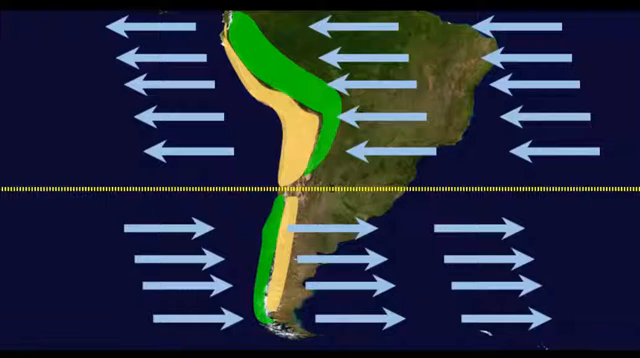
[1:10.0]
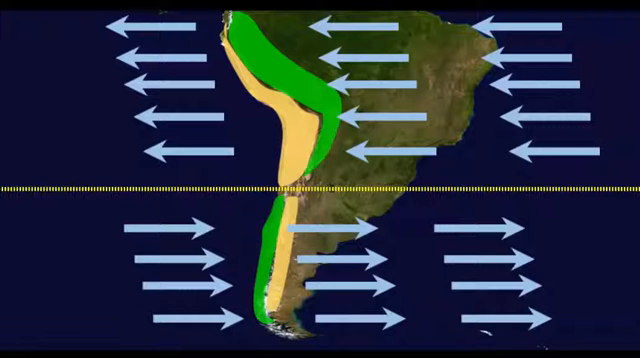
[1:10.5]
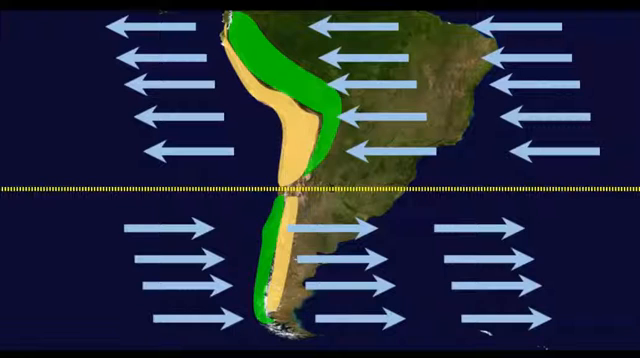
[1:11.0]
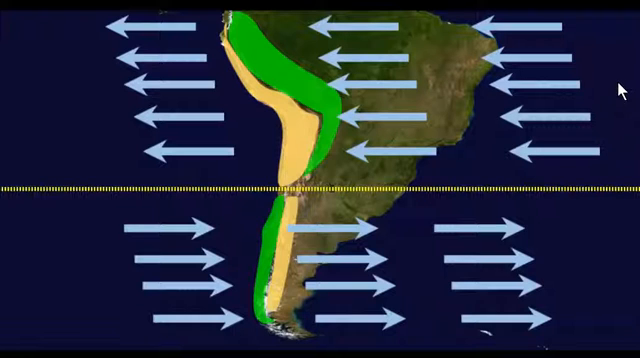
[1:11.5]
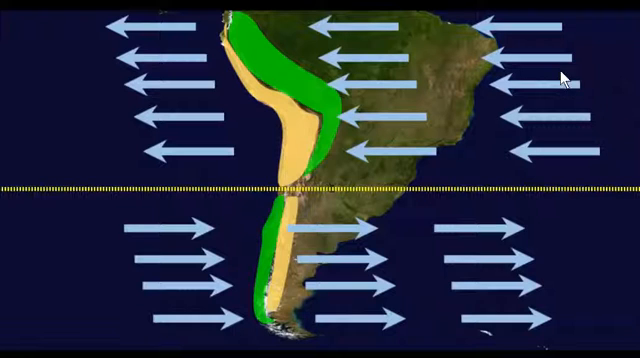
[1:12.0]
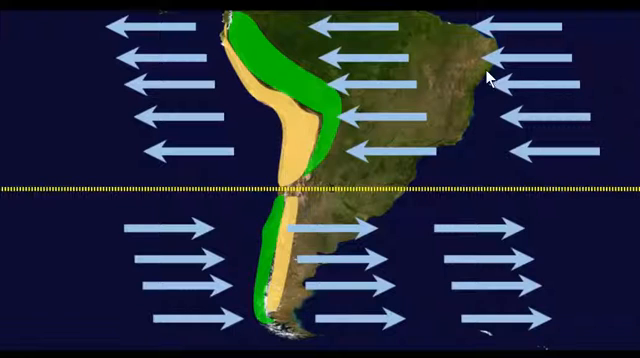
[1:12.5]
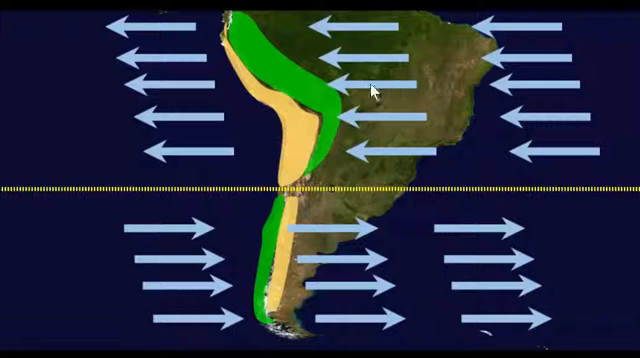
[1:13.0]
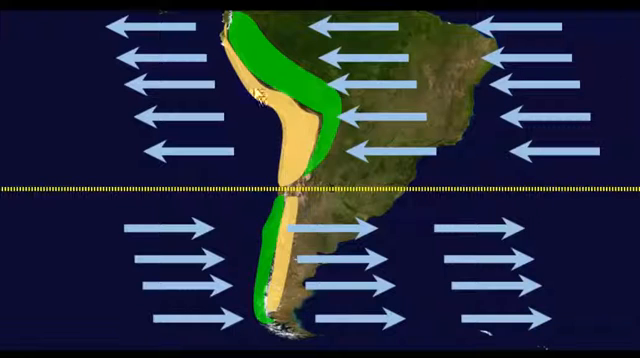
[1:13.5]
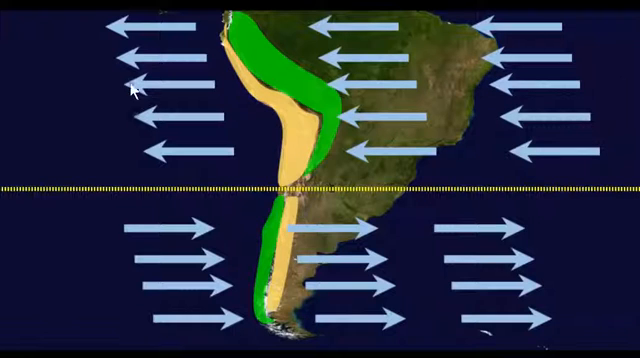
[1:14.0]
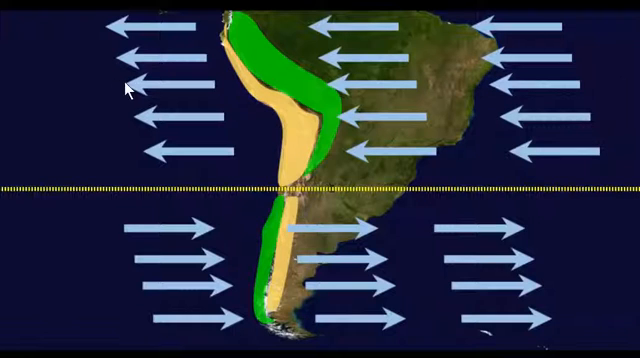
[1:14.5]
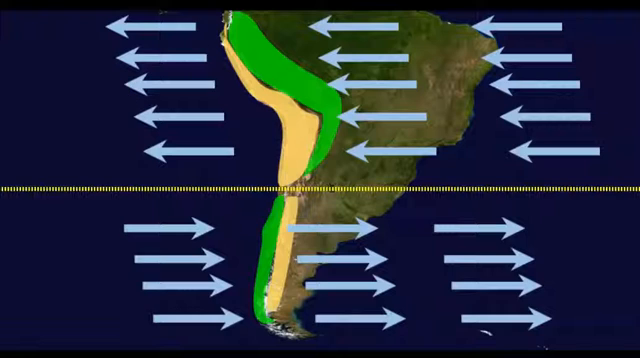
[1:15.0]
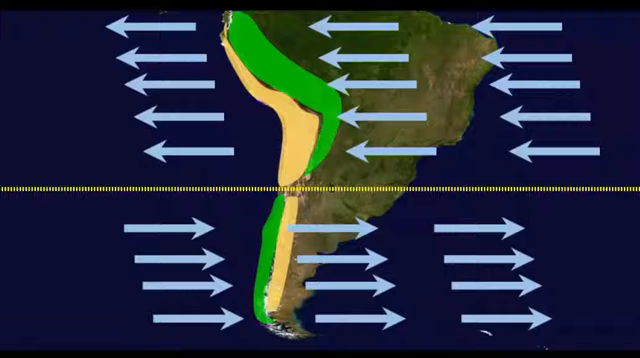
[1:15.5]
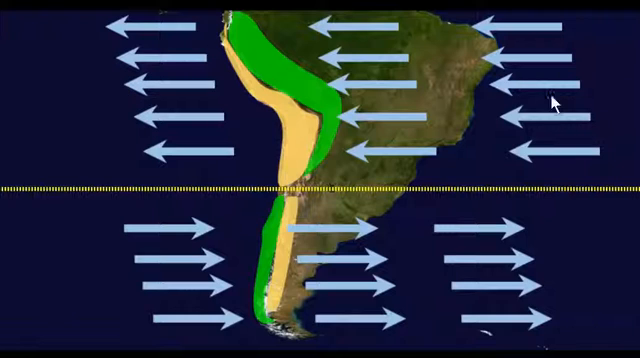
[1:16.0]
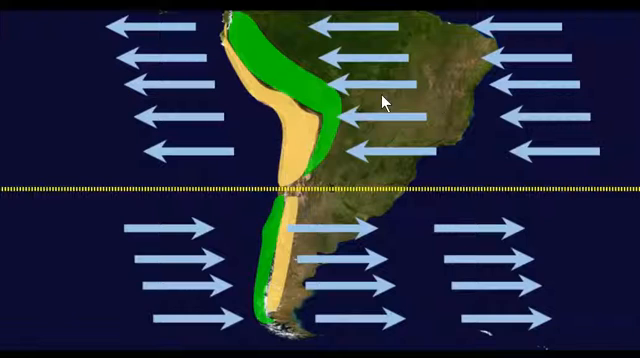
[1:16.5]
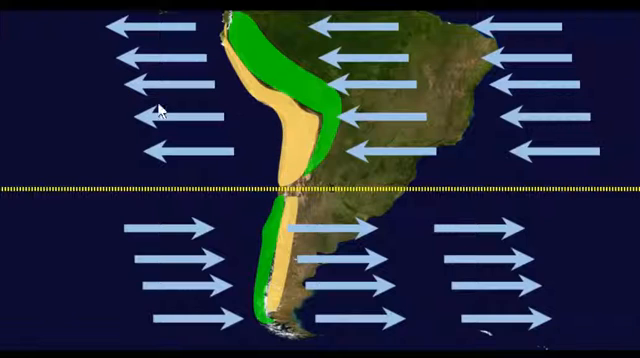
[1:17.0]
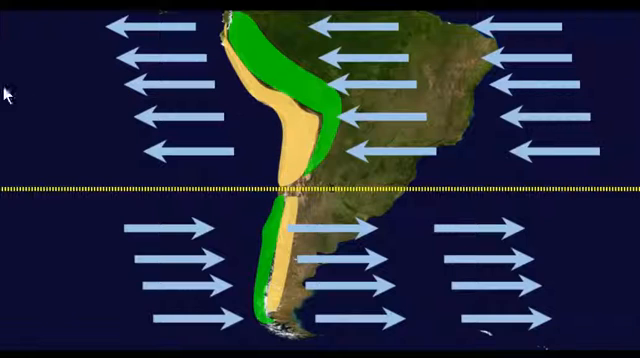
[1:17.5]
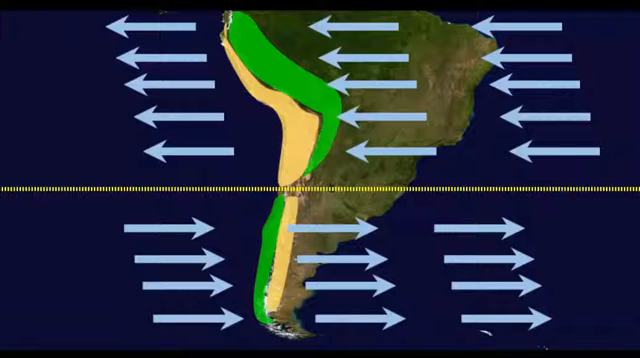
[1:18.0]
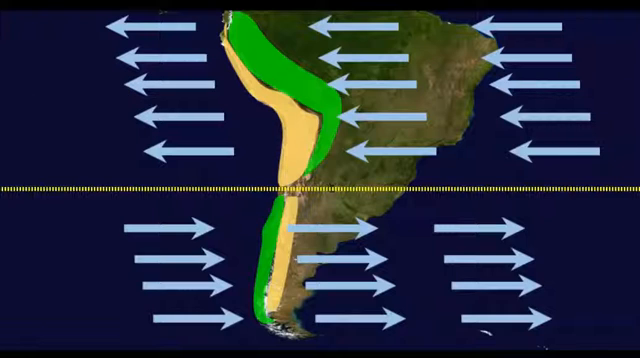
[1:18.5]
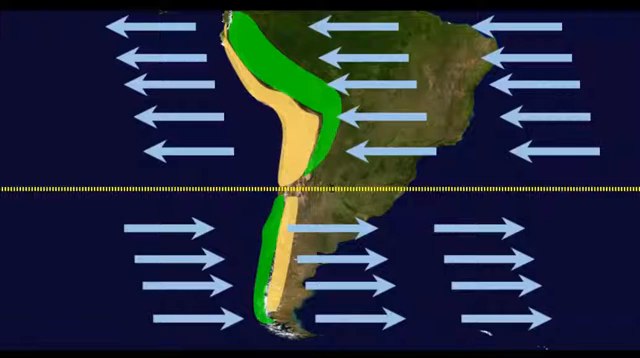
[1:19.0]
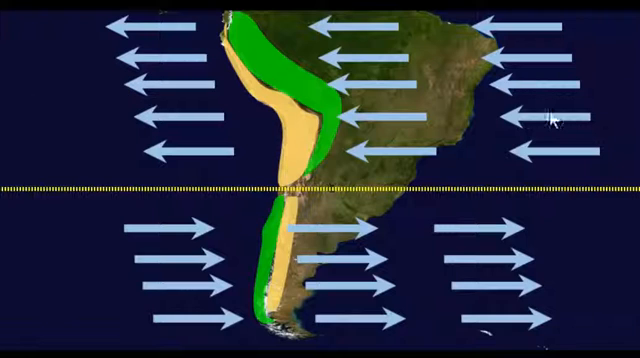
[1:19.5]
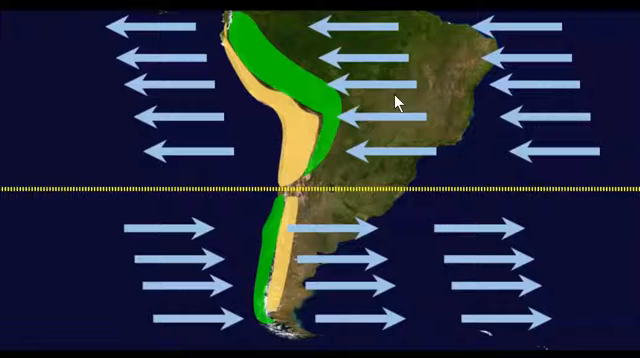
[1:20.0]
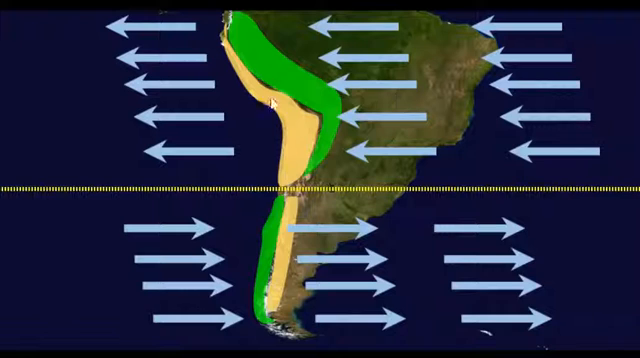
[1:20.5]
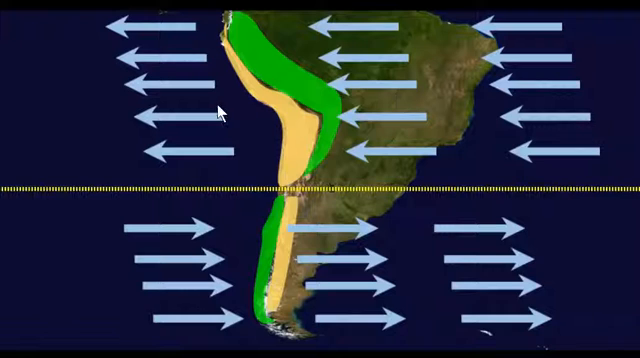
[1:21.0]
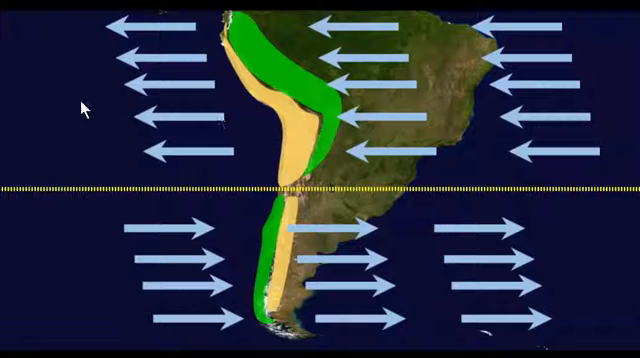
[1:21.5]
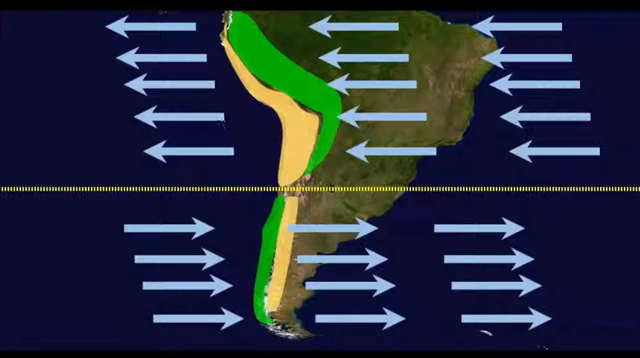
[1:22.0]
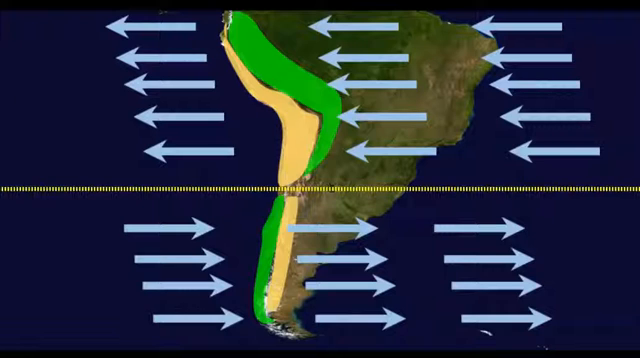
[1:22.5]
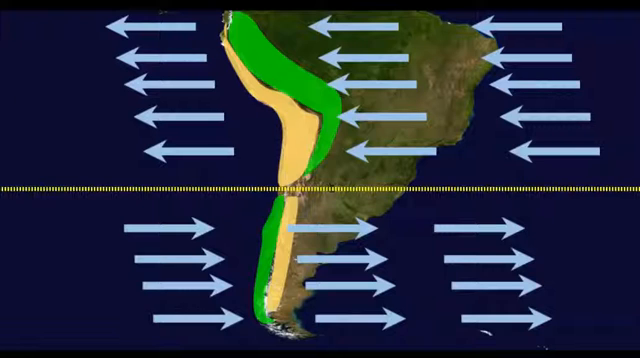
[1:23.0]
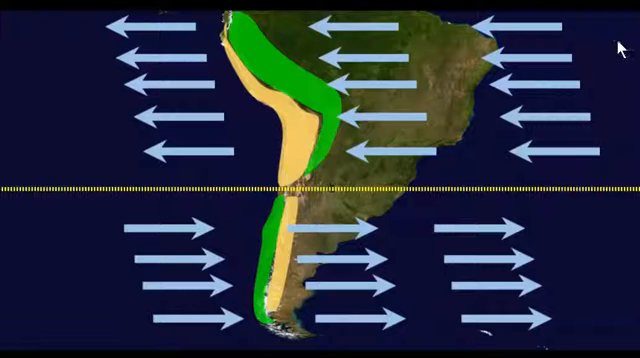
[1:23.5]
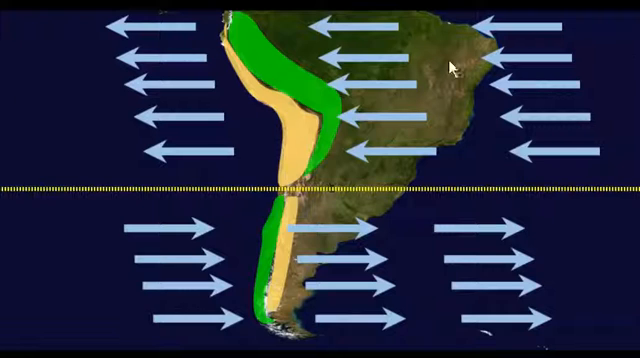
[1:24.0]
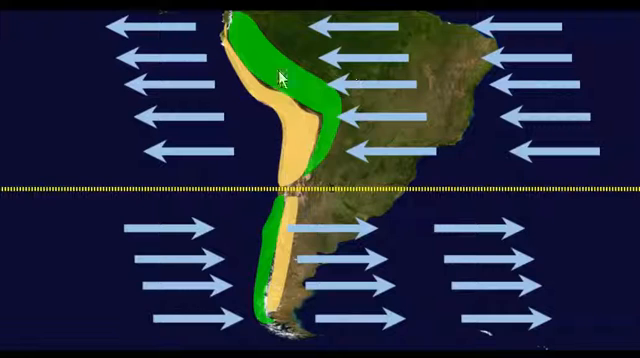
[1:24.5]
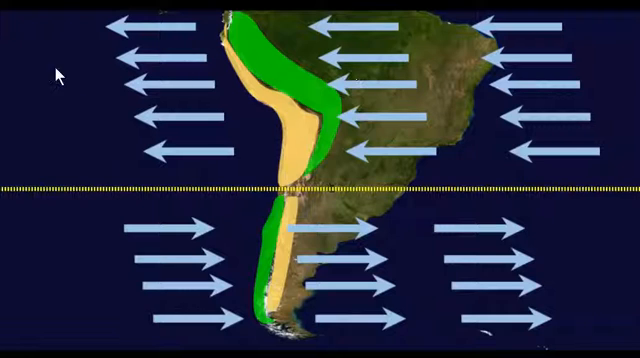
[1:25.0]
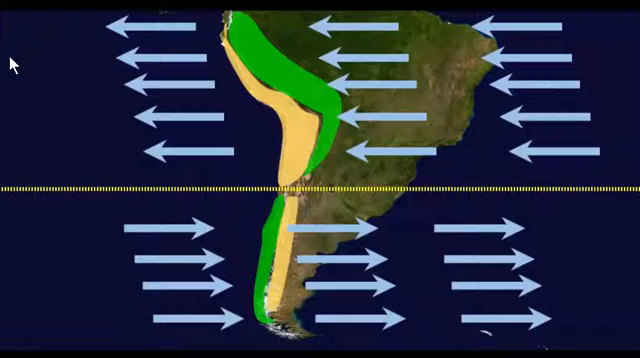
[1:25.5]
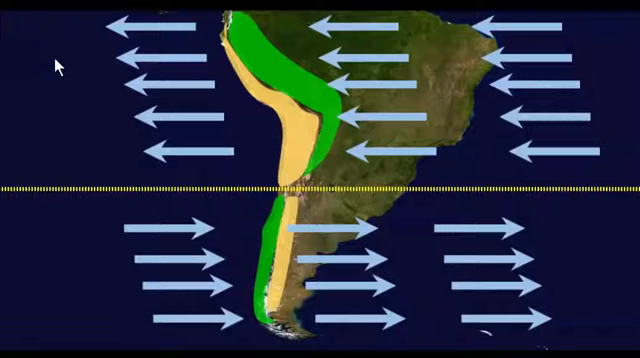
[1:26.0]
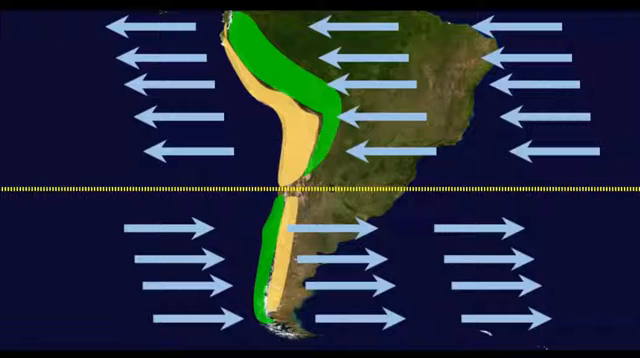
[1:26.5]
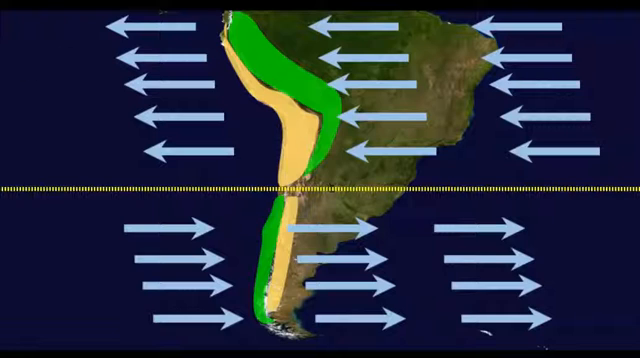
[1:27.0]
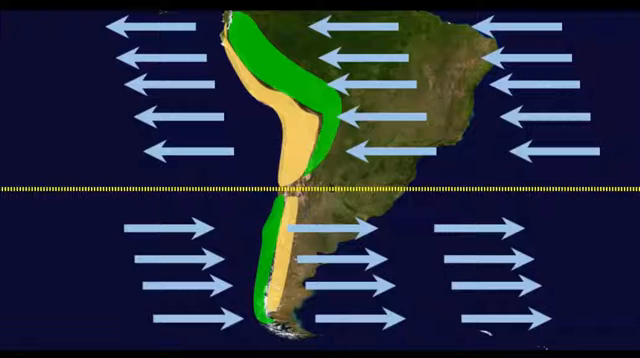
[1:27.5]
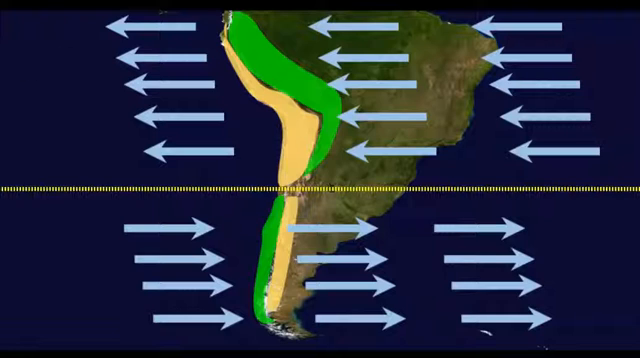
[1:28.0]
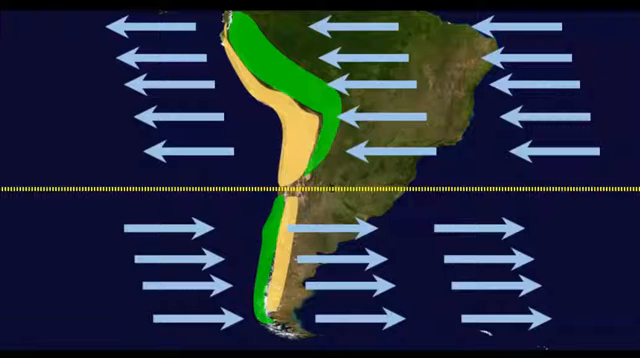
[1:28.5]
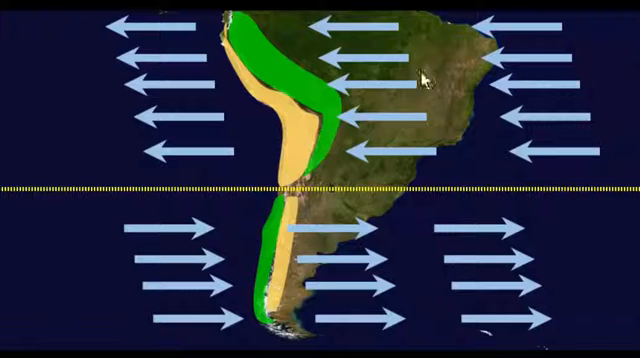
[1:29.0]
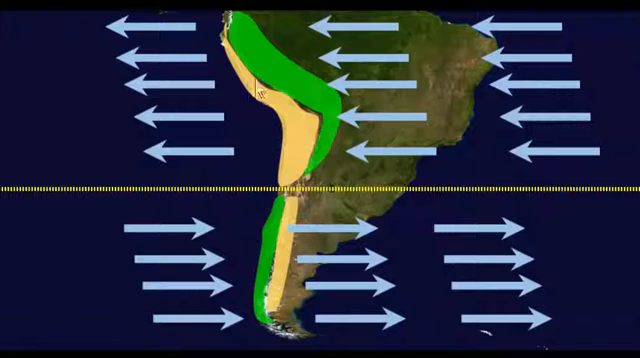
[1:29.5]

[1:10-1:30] The graphical map illustration is displayed on a dark background, with a yellow dotted line running horizontally across the screen over the landmass. Above the line are three batches of five arrows each, pointing left; below the line are three batches of five arrows each, pointing right. The white mouse pointer hovers across the left-pointing arrows in the upper part, moving across the screen over the arrows above the dotted line and repeating this movement about three times. On the east side of the landmass, yellow and green lines painted with white follow the curvature of the map's outline.